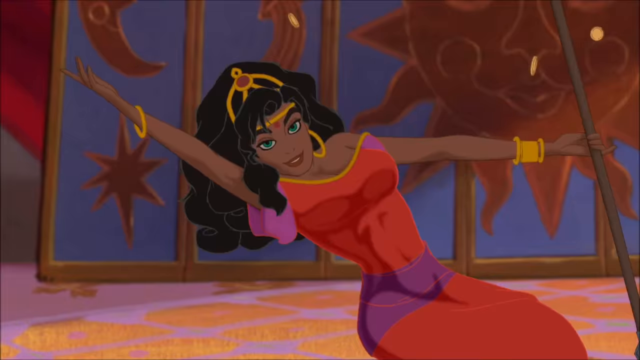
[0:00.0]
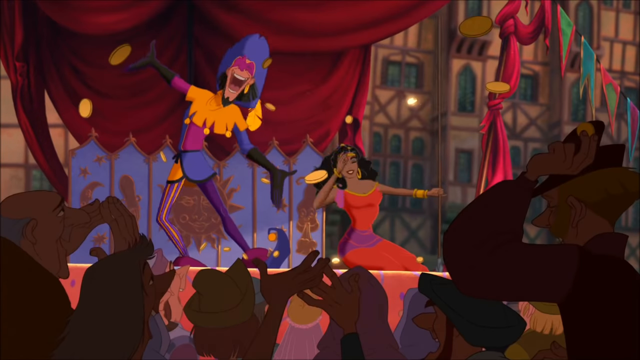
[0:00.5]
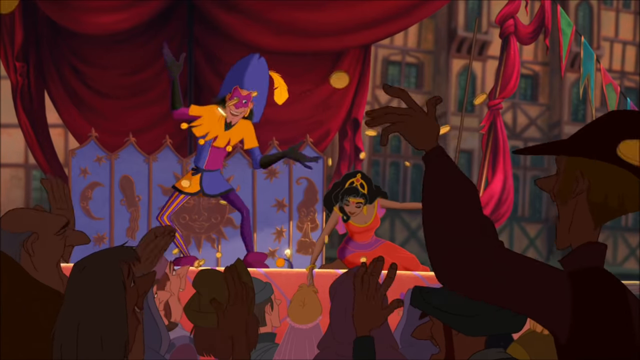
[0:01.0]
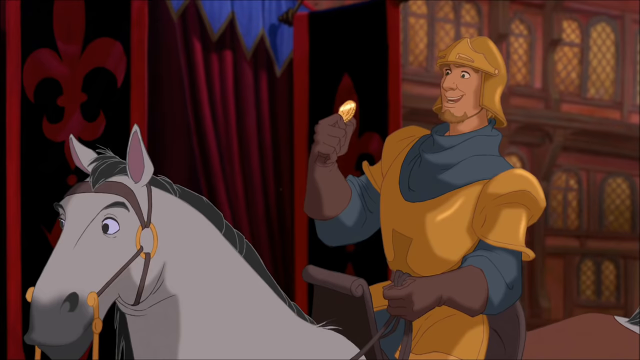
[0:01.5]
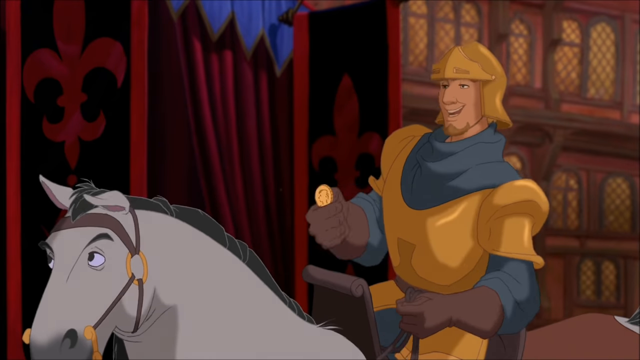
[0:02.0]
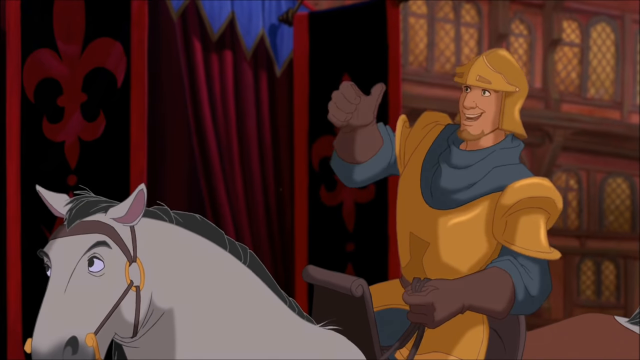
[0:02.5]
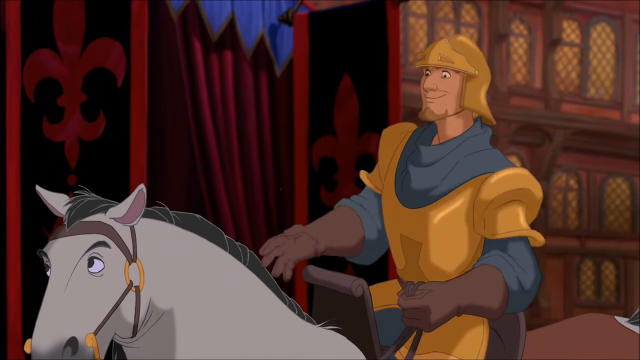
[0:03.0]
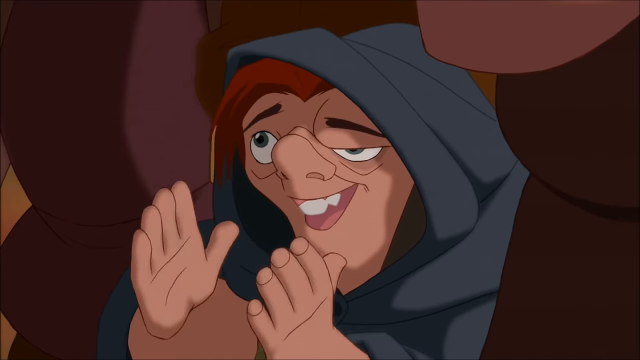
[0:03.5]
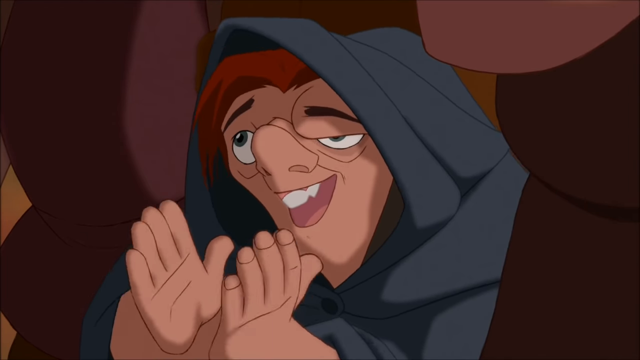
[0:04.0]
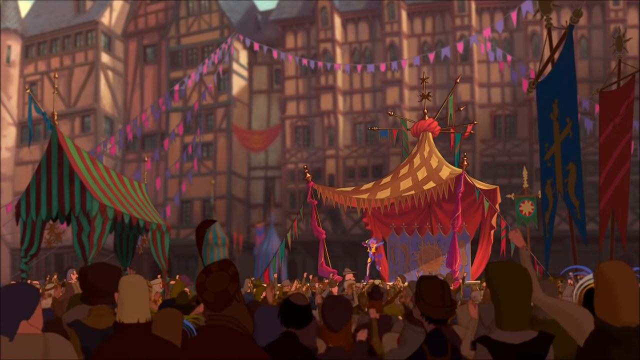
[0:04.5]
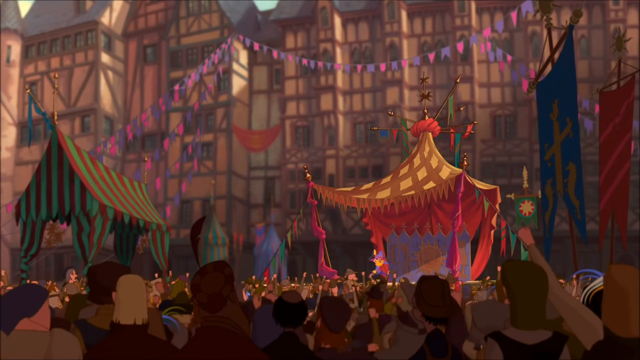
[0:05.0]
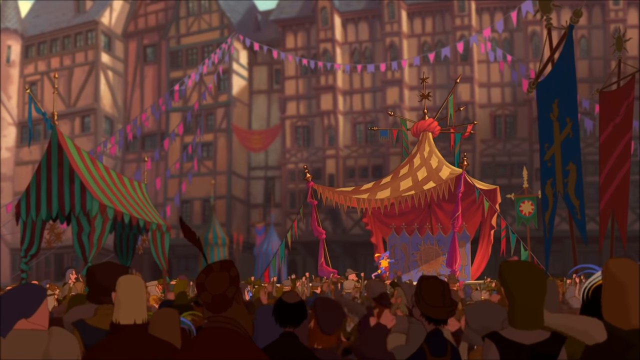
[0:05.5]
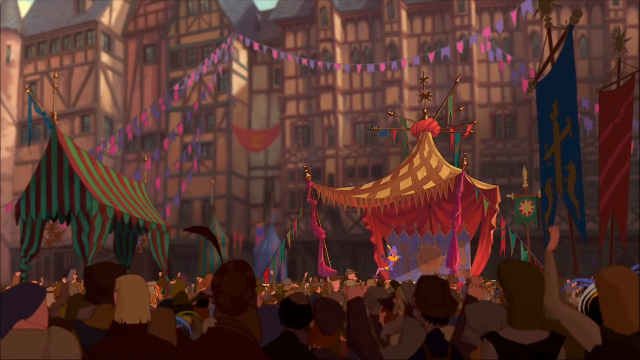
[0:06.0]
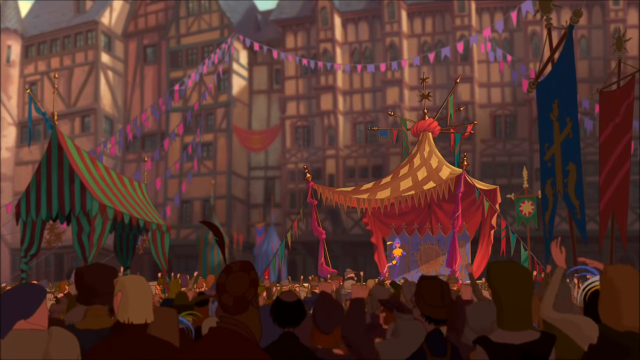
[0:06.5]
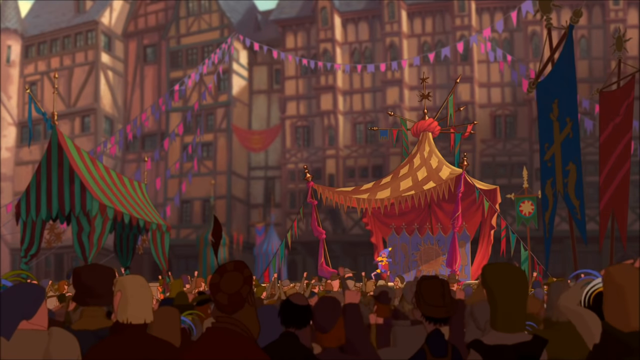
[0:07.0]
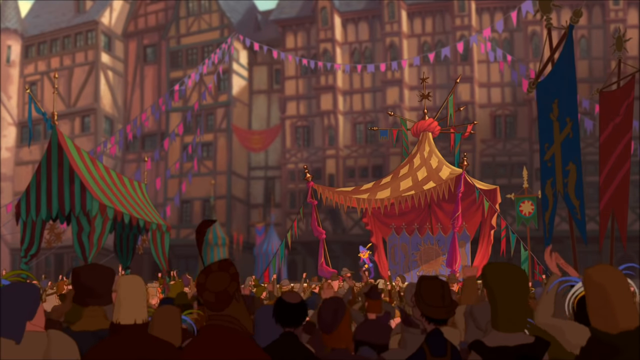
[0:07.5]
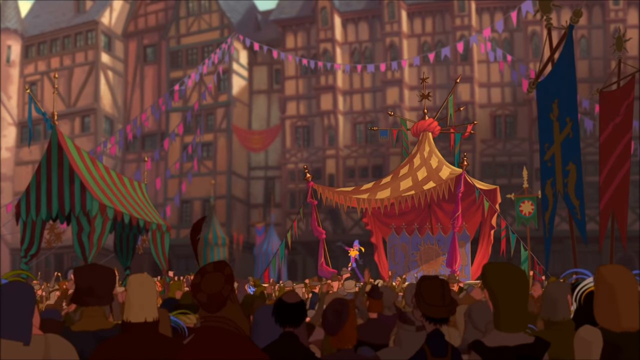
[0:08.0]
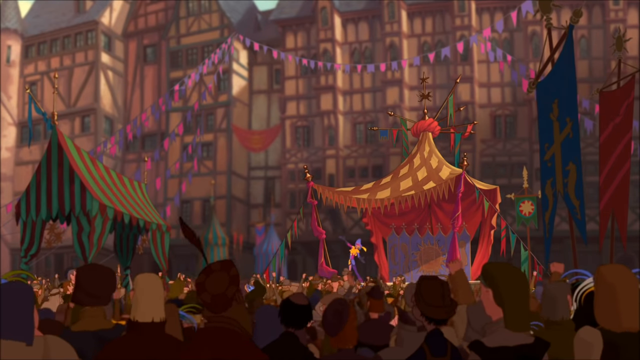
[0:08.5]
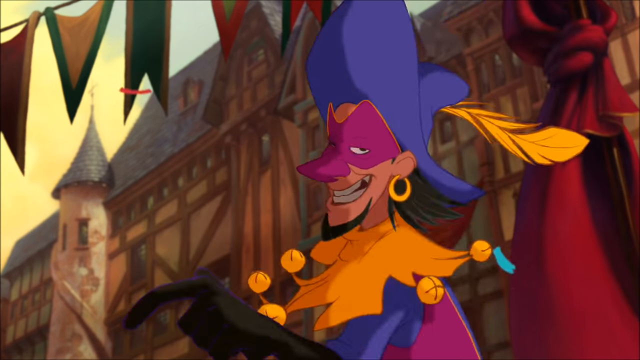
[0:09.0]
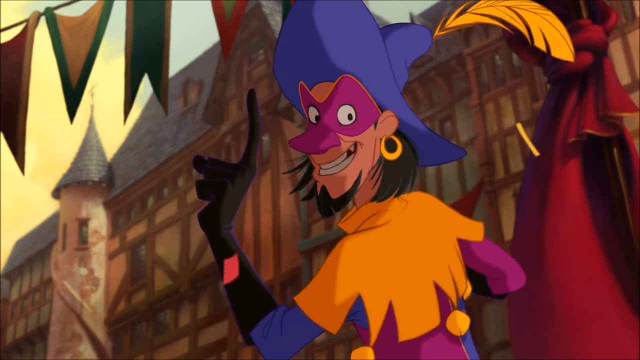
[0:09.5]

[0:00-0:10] The video is called Topsy-Turvy the King of Fools. On-screen text reads either 180 or 1080P. It opens with what appears to be a knight or king on a horse talking animatedly while people clap, and the face of a serf clapping for this figure on the horse is shown. The view pulls back to a scene in what appears to be a city or in front of a castle, where a red and yellow tent is set up and thousands of cheering people are on this side of the tent, between the viewer and the tent. On the stage is what appears to be a fool or jester with a woman; he gestures wildly, turned off to the side, while the woman next to him bends down, almost bowing to him. The scene switches back to the man on the horse, who tosses a coin in the air, apparently to the jester on the stage in appreciation of his performance.